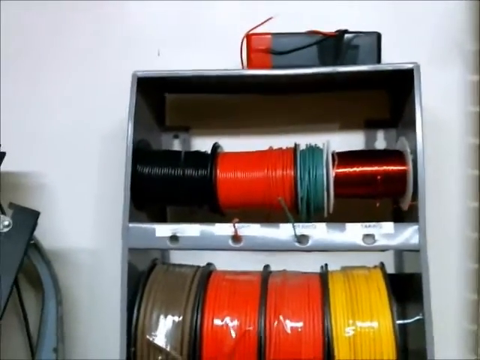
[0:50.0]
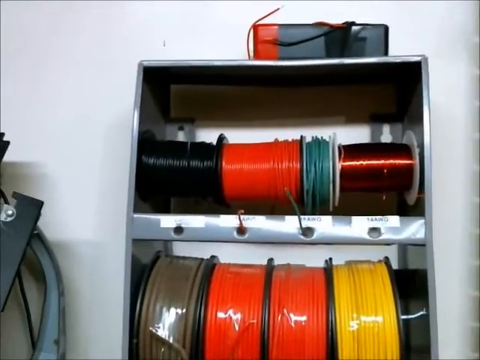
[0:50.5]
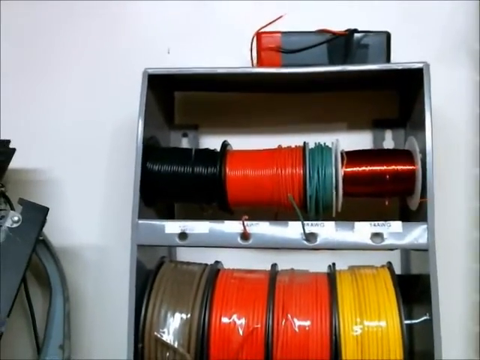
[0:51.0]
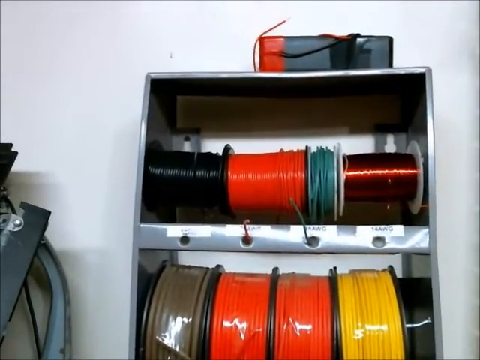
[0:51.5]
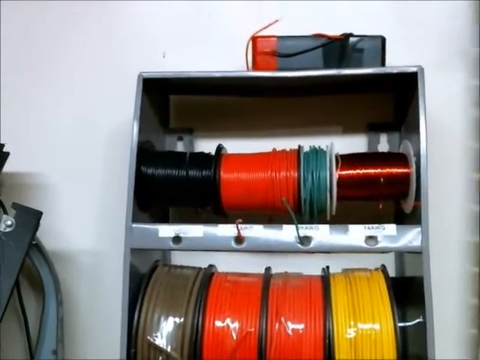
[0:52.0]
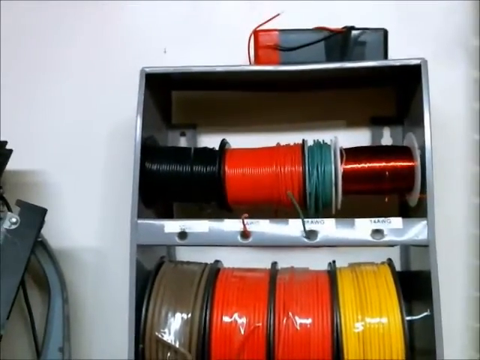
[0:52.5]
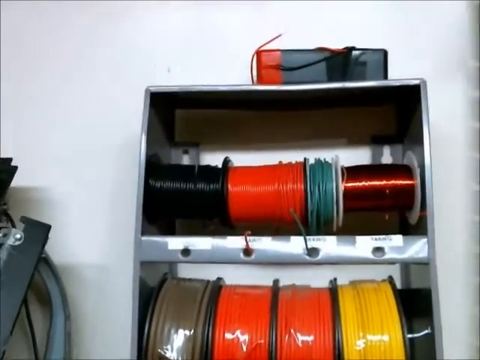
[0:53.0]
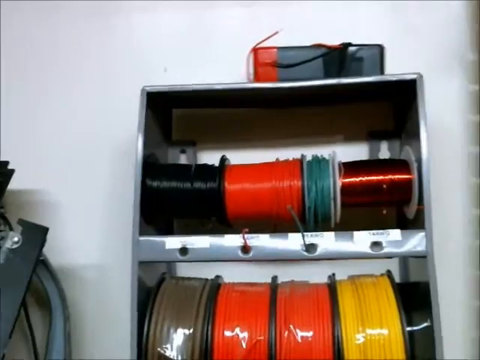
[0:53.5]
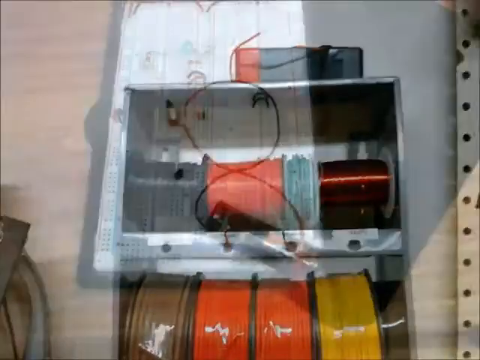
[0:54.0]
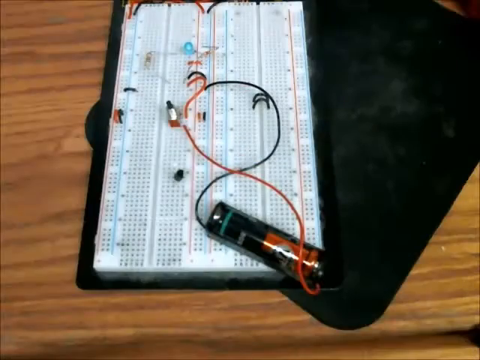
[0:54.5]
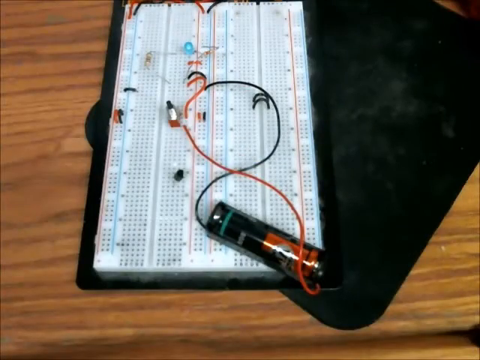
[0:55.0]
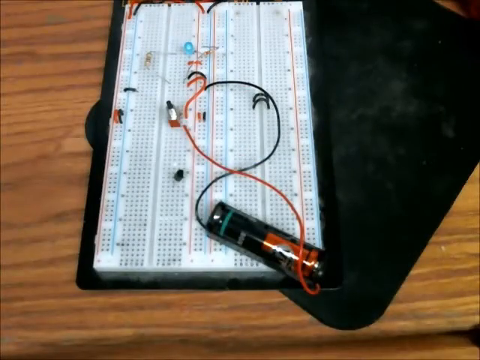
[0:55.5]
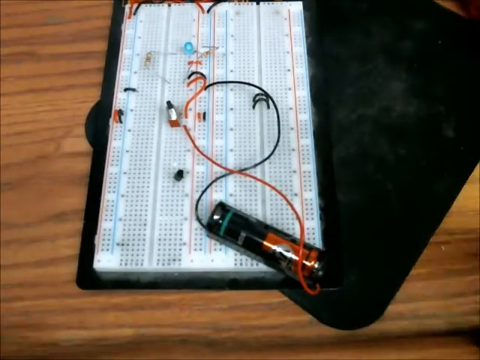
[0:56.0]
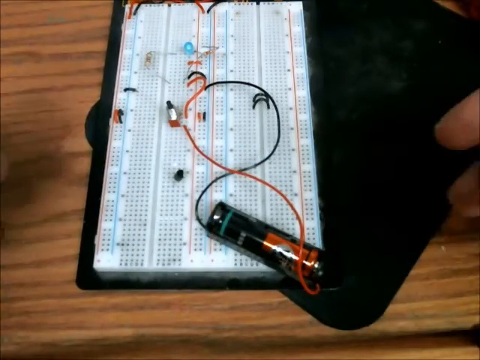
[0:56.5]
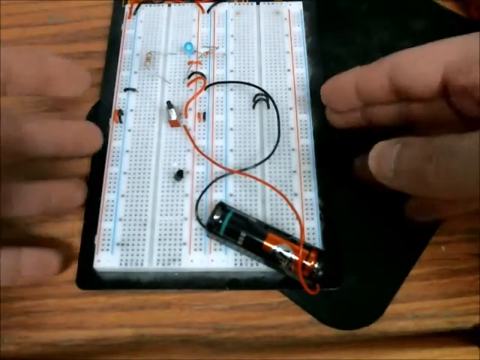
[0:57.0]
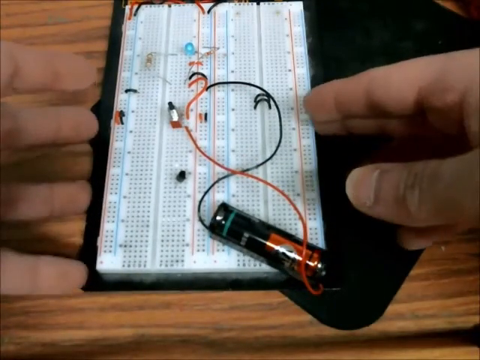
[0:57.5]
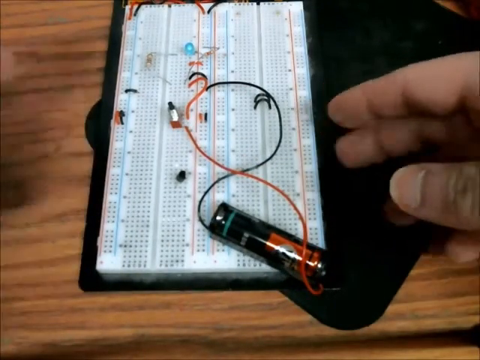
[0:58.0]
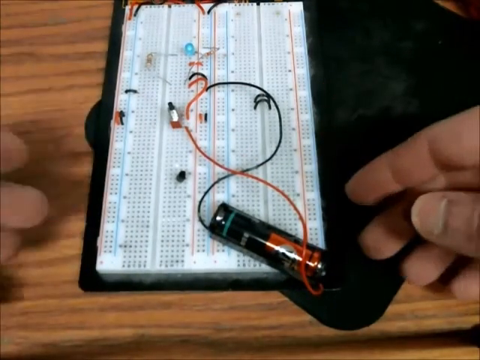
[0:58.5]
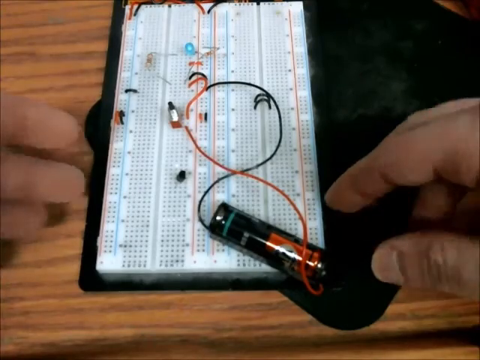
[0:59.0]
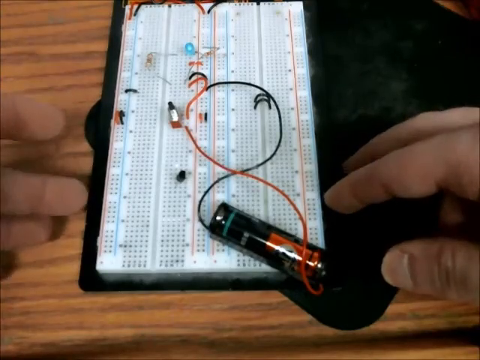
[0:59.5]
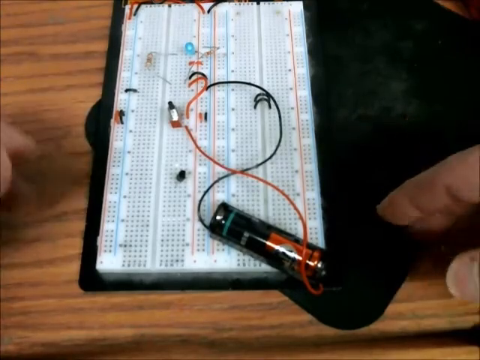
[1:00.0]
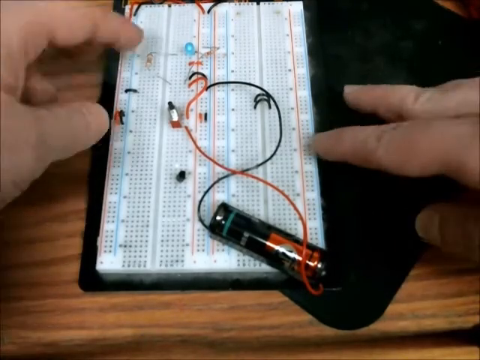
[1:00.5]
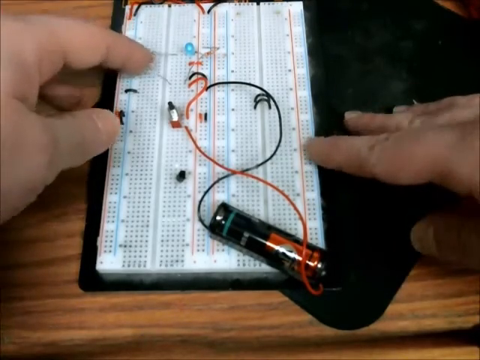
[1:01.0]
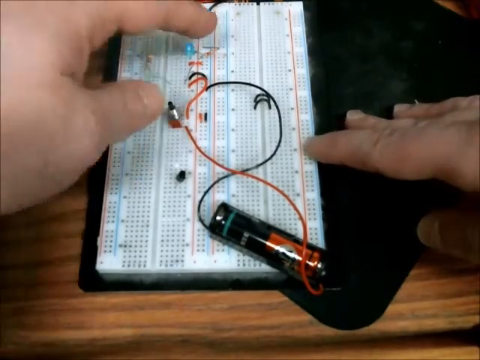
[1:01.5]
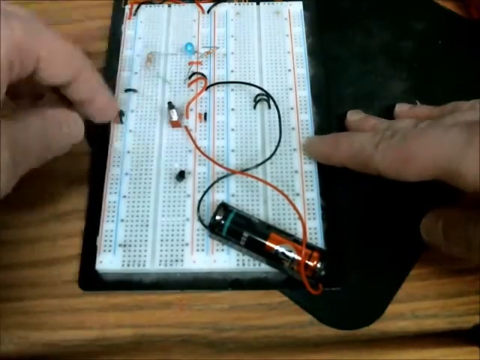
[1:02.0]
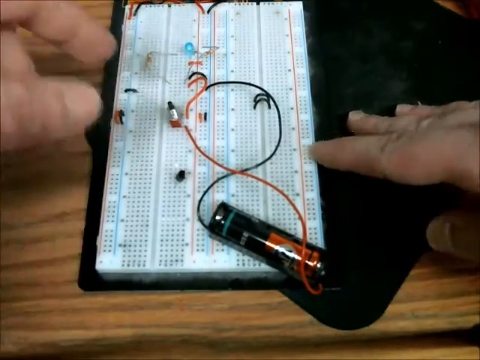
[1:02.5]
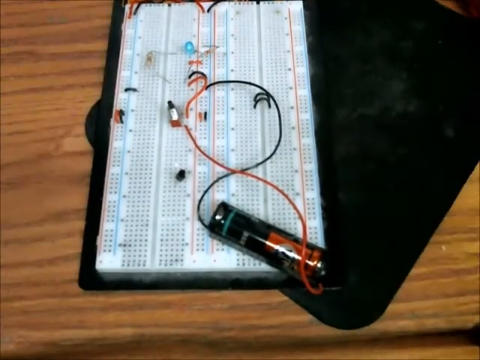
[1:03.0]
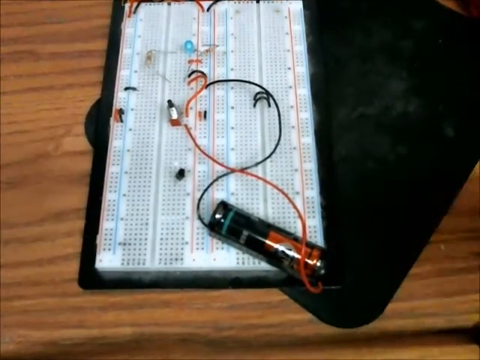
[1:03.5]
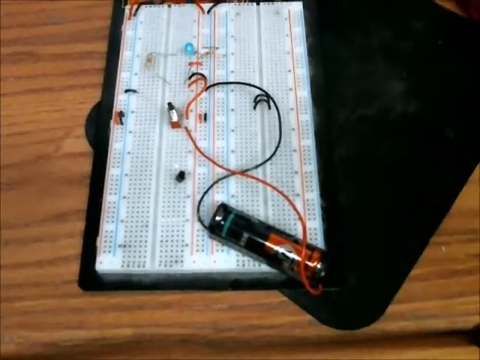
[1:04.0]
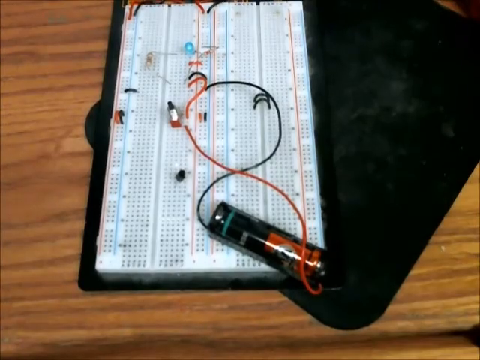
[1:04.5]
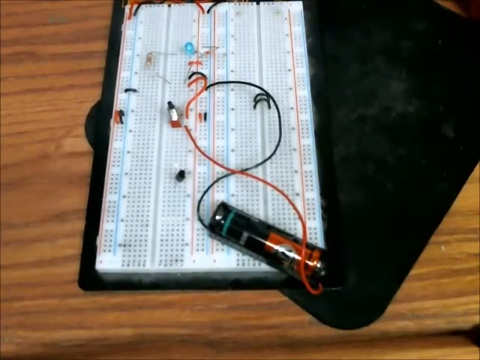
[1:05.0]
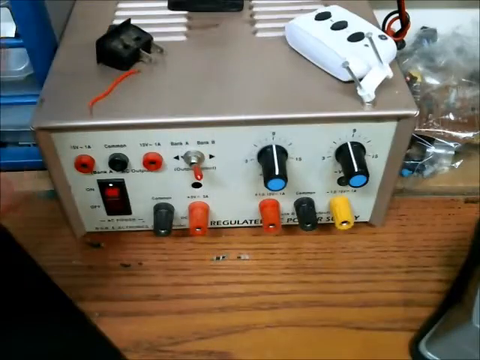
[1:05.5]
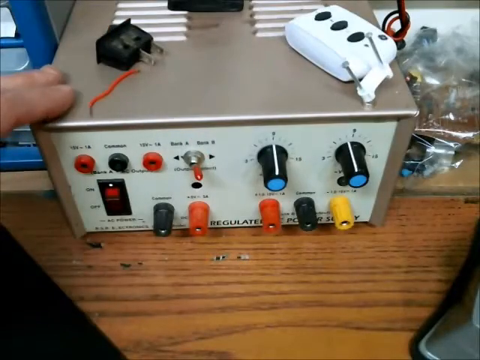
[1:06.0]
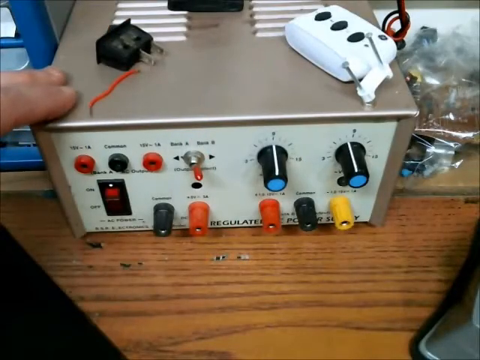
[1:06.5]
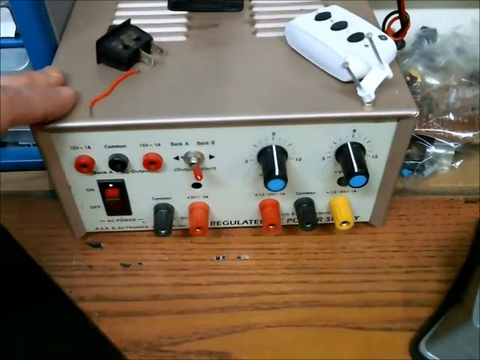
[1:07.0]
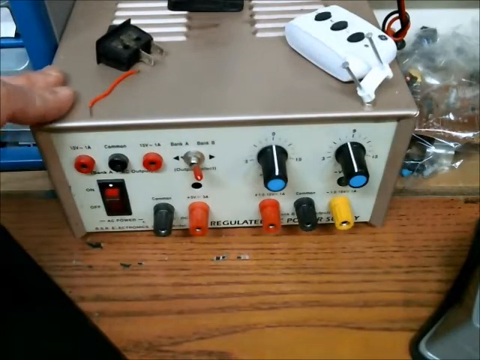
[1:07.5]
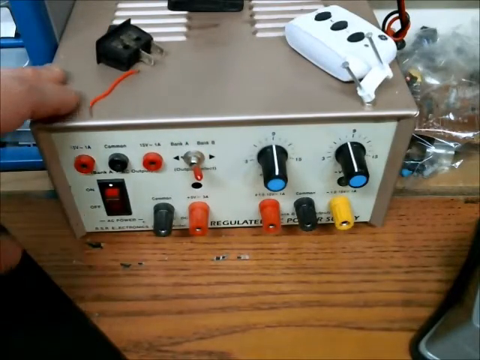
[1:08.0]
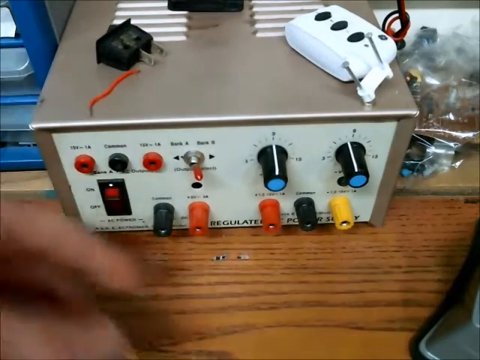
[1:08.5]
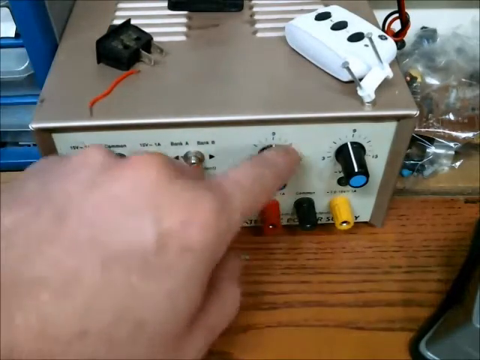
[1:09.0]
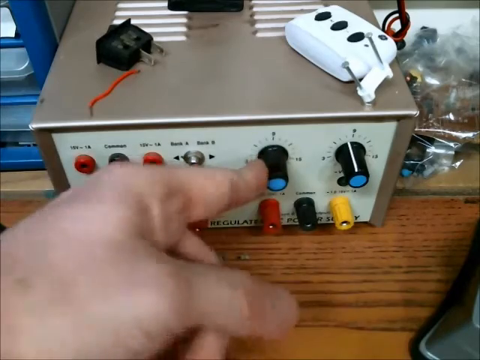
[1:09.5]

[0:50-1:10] A square metal thing holds eight wires. On the top, from left to right, are black, orange, green and maroon wires; on the bottom, from left to right, there appear to be tannish brown, orange, another orange and yellow. The camera is very shaky. The view changes to both hands over what looks like possibly a computer board, and the left hand touches it. Next comes what looks like some kind of electronic box; the left hand is placed on the black knob and a finger turns around it. The shot then returns to the square metal thing with the black, orange, green and maroon wires on top.